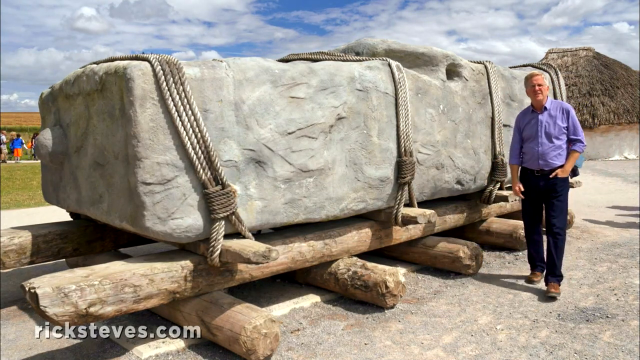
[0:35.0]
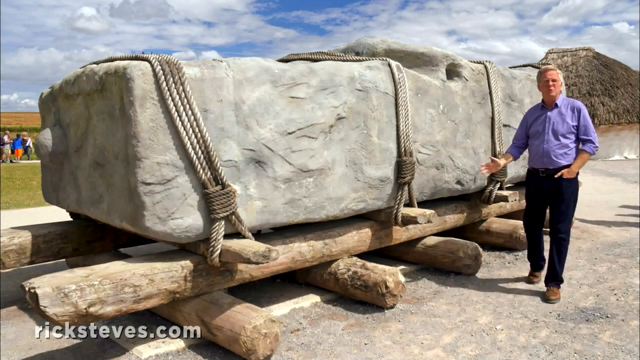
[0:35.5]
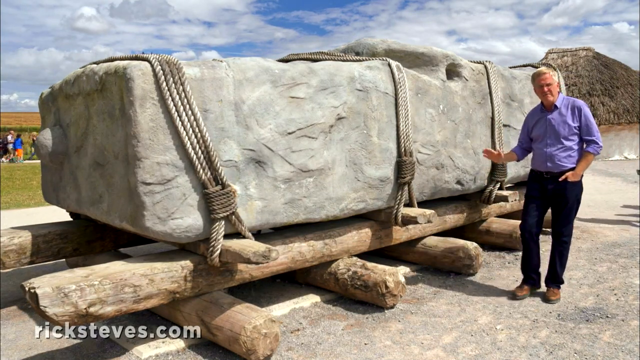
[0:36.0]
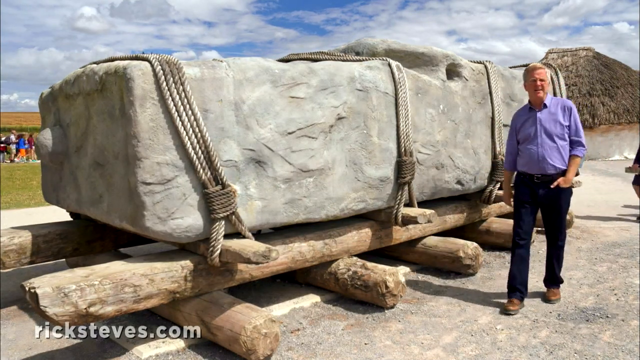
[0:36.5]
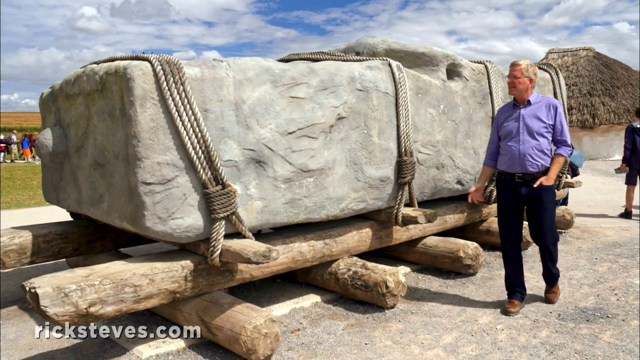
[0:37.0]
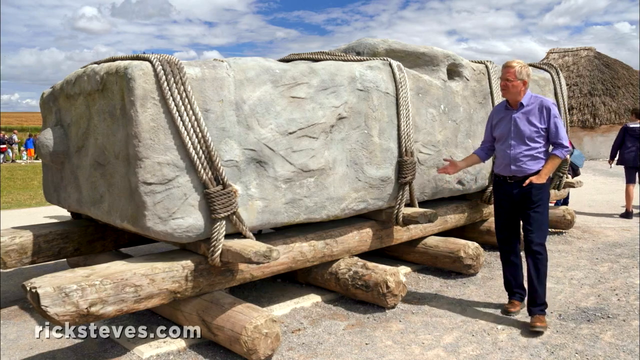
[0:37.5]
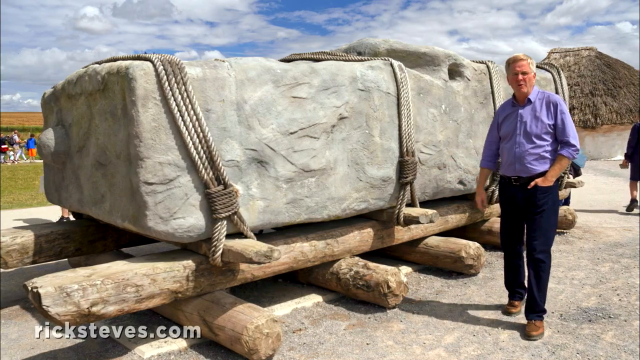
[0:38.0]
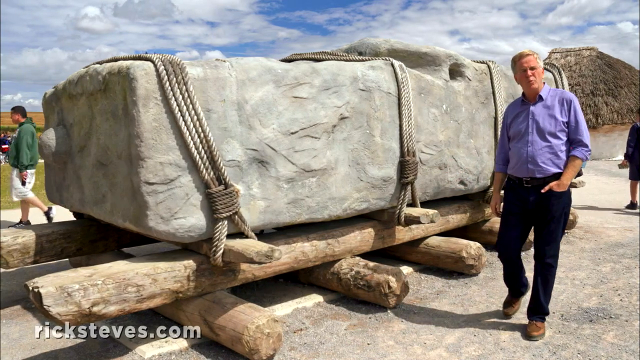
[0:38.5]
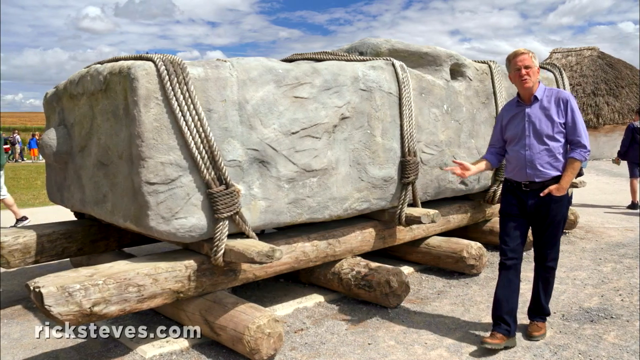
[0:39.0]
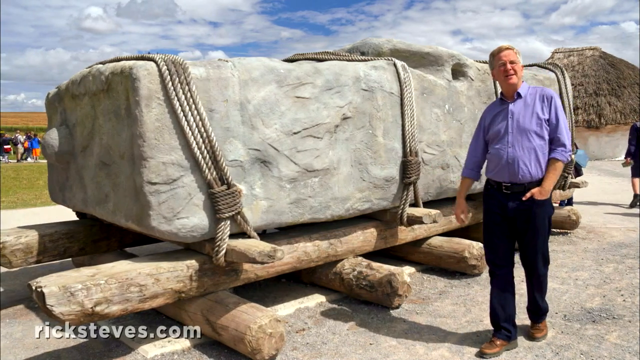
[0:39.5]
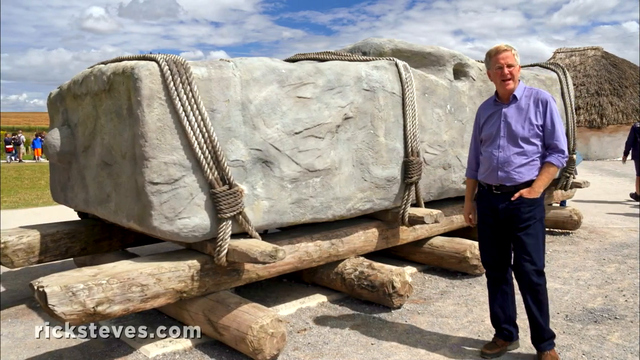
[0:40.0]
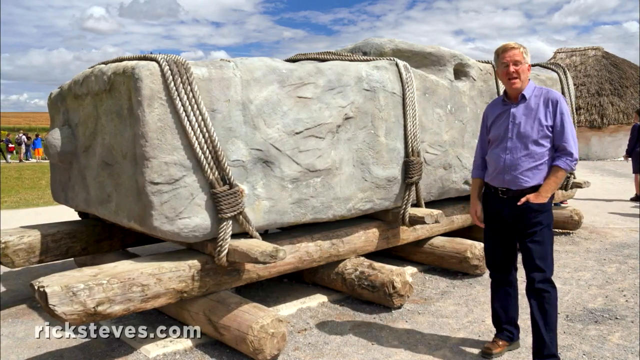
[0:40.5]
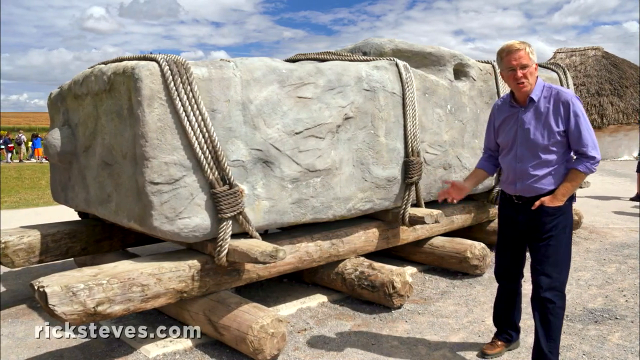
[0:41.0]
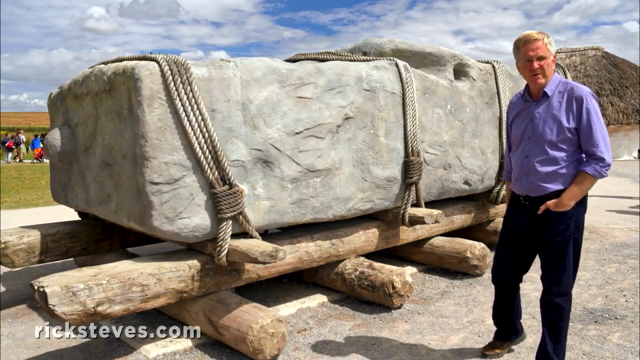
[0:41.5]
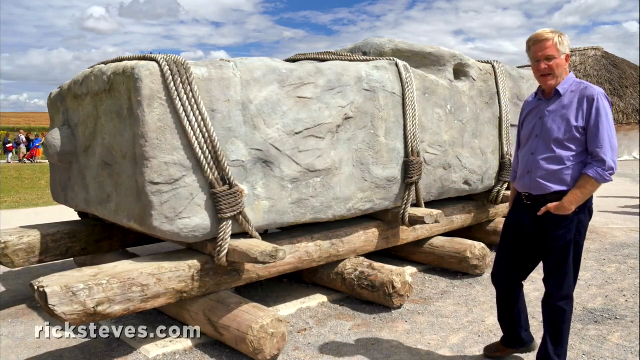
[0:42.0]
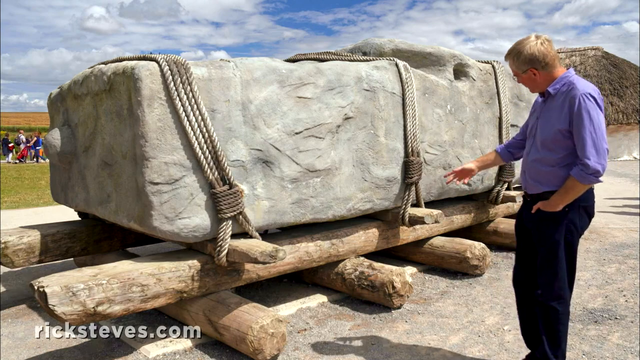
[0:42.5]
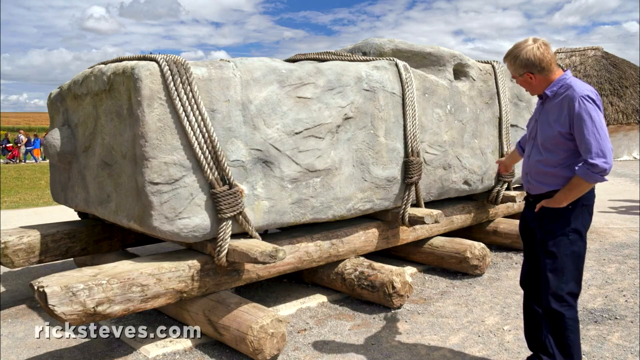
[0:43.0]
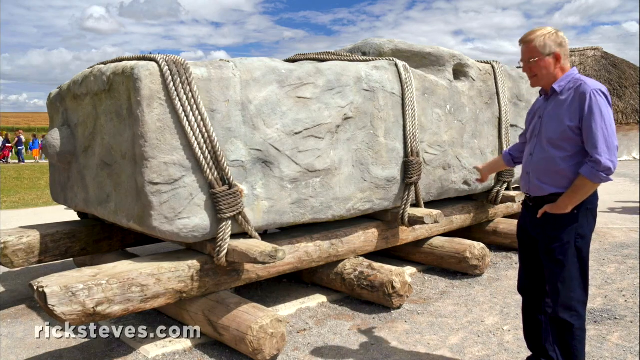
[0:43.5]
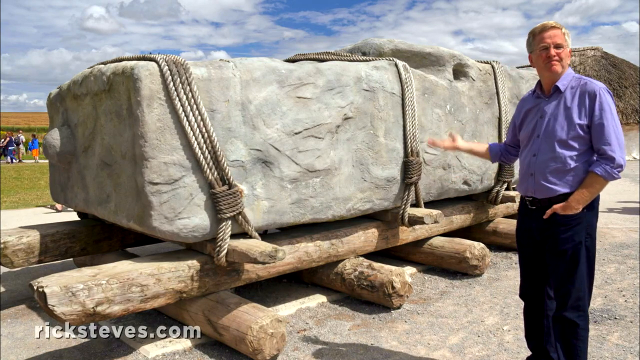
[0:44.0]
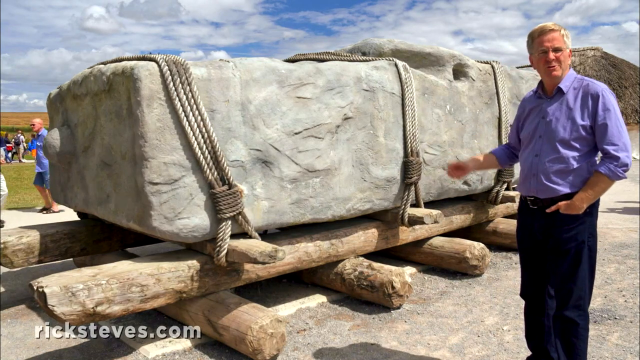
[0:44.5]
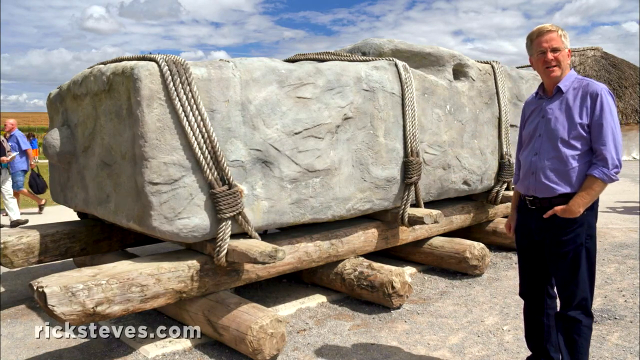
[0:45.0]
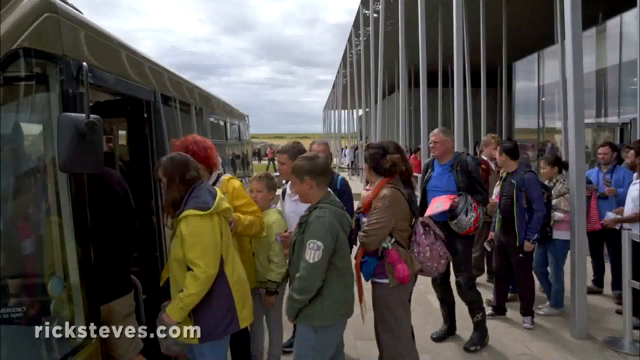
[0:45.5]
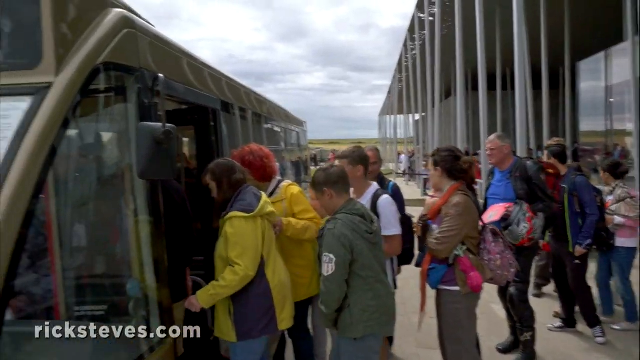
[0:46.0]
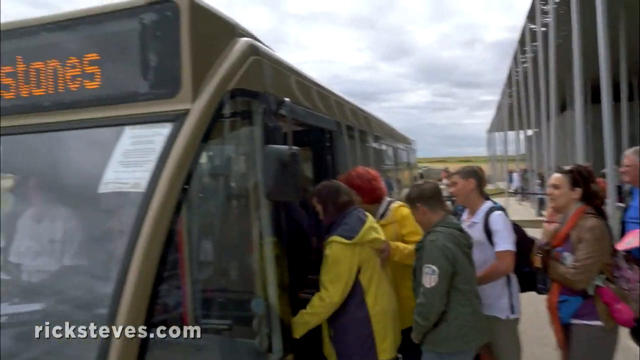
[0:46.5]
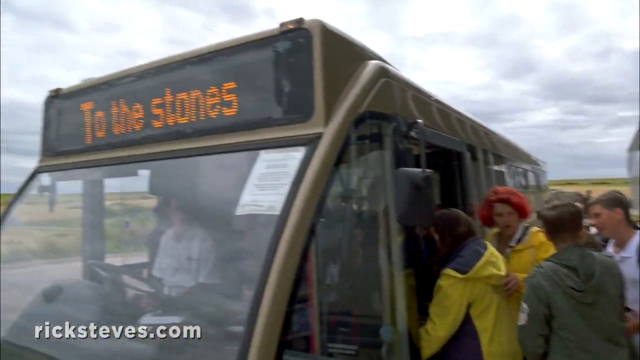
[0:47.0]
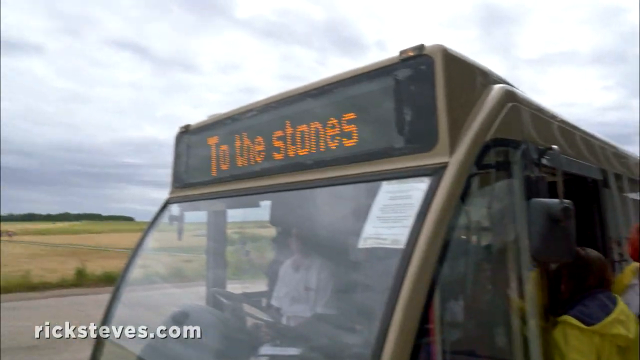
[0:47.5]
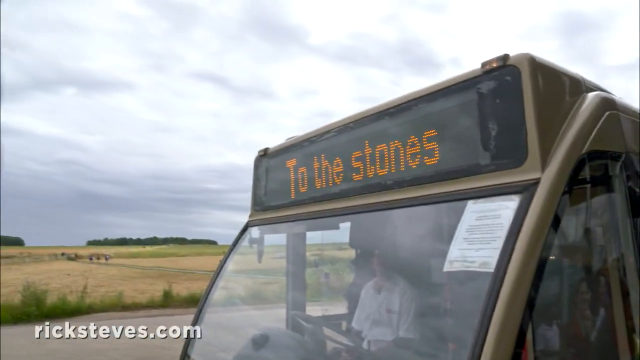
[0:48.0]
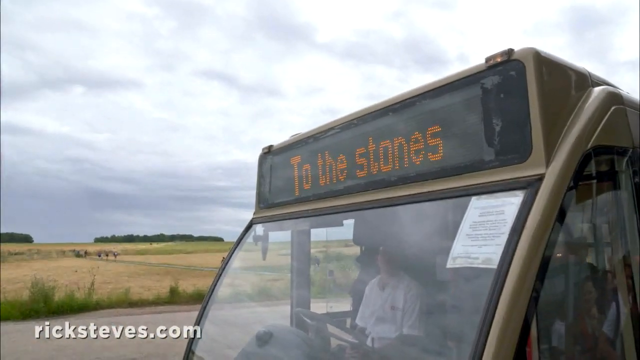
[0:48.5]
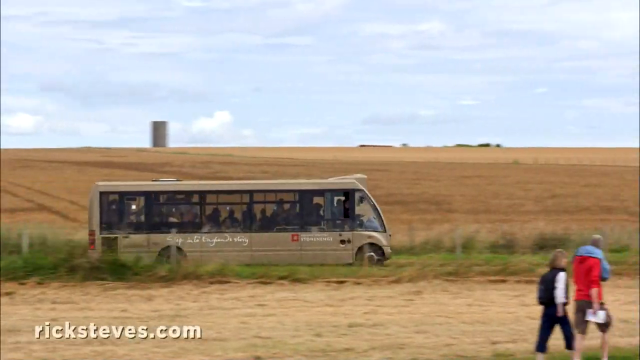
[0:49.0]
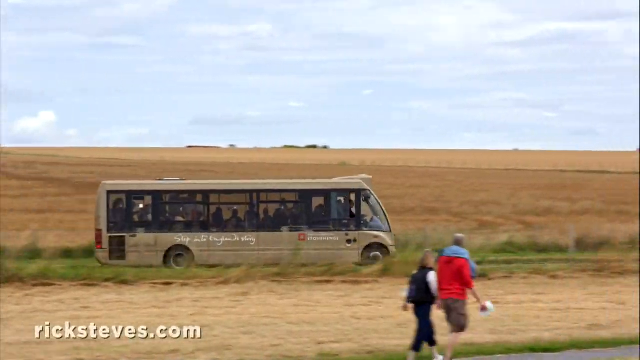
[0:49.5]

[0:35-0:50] A man stands in front of a big boulder on a wooden platform; the boulder is strapped with really thick rope. He points to the boulder and talks to the camera. He has gray hair, wears glasses, looks to be in his 50s or 60s, and wears a blue button-down shirt, navy pants and brown boots. A tour bus drives along a grassy, landscaped area, and several people load onto a bus that says "To the Stones" on the front. Two of the people loading onto the tourist bus wear yellow rain jackets. A man in a green shirt walks behind the boulder on a walkway.